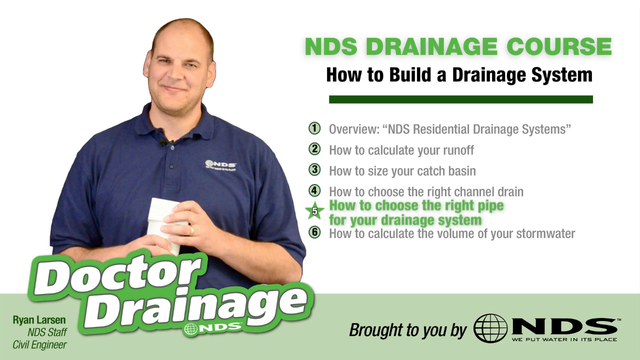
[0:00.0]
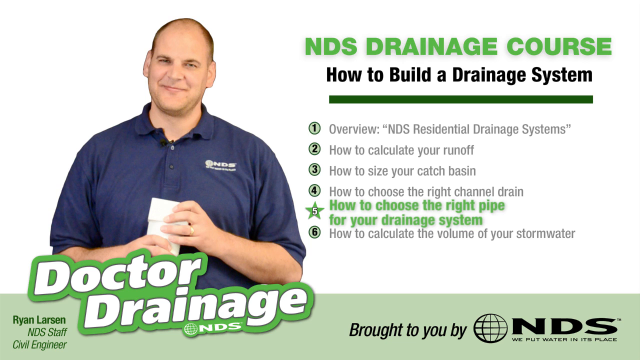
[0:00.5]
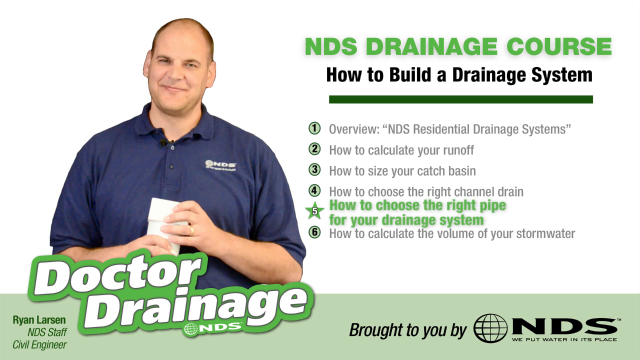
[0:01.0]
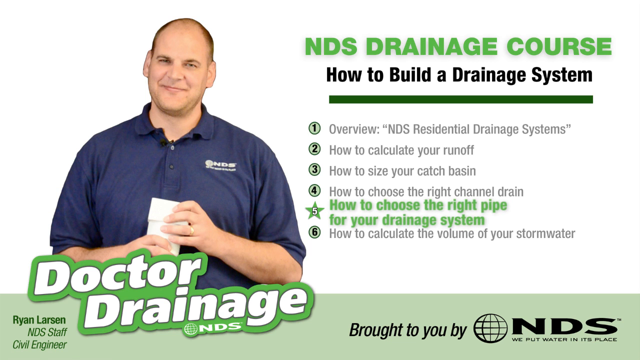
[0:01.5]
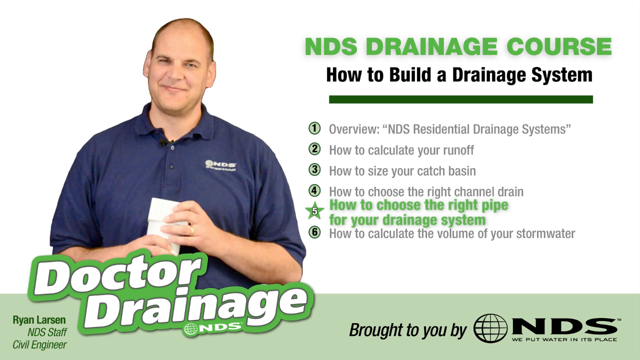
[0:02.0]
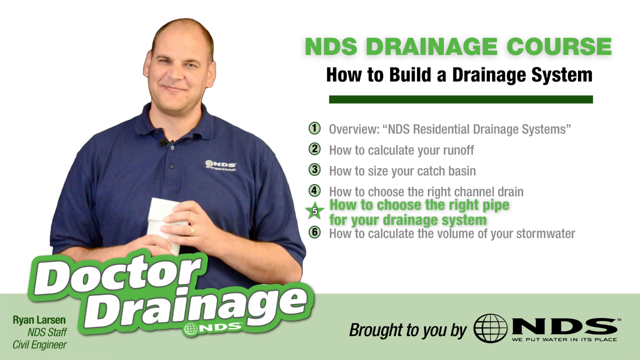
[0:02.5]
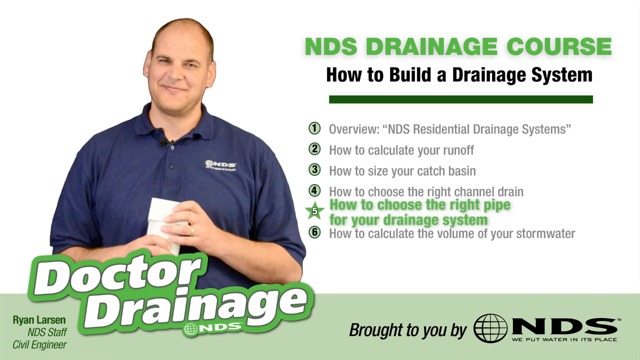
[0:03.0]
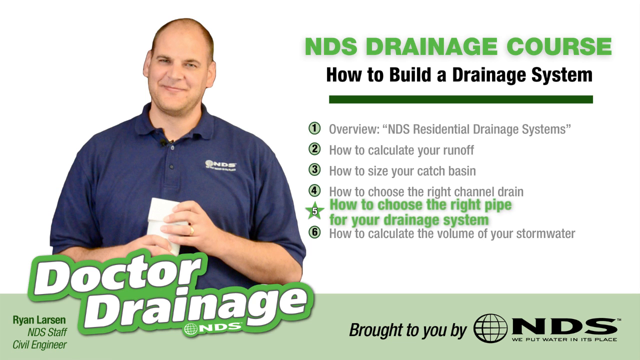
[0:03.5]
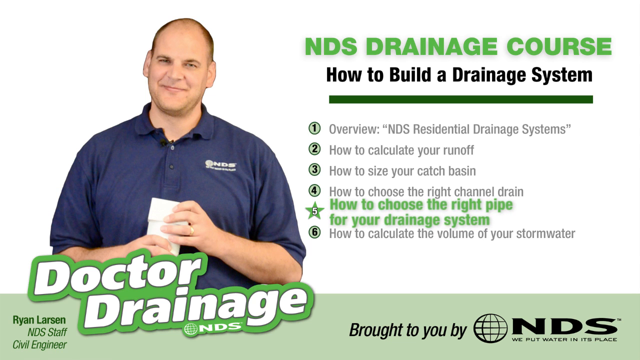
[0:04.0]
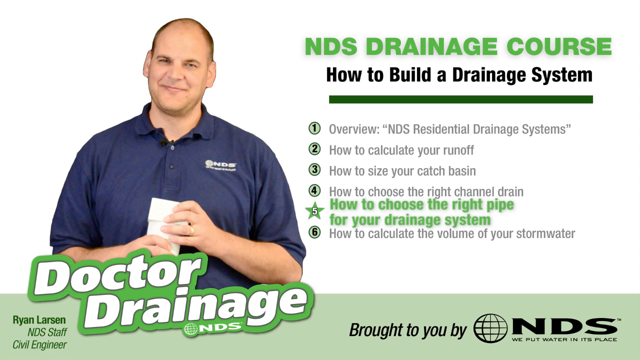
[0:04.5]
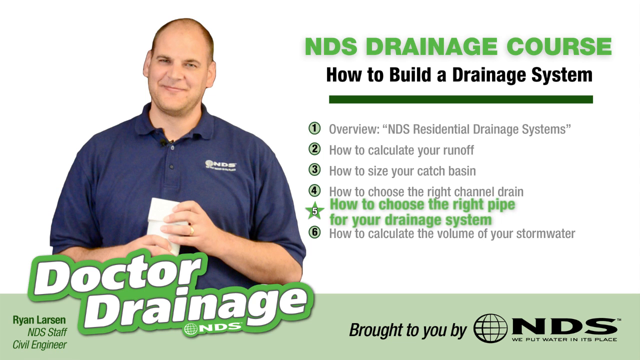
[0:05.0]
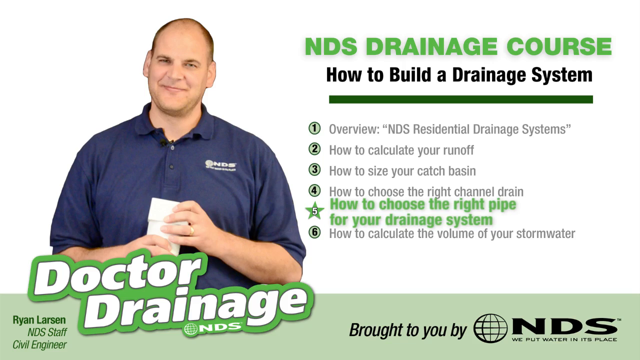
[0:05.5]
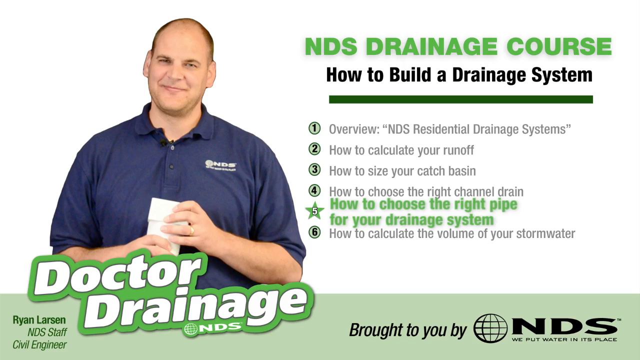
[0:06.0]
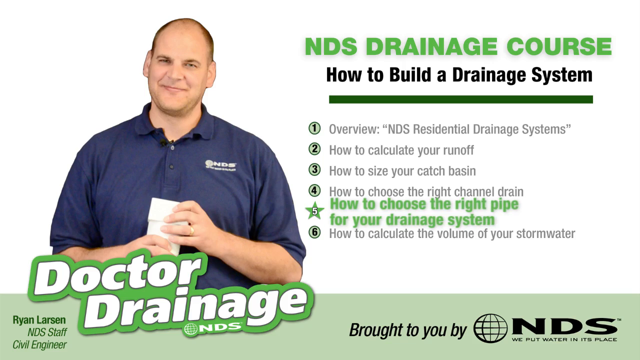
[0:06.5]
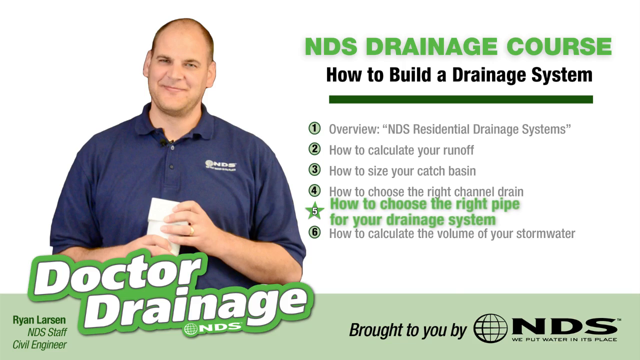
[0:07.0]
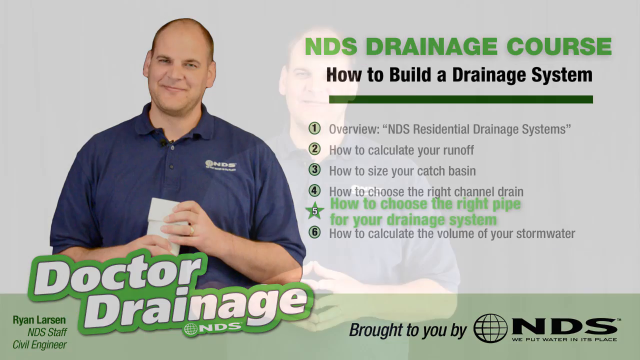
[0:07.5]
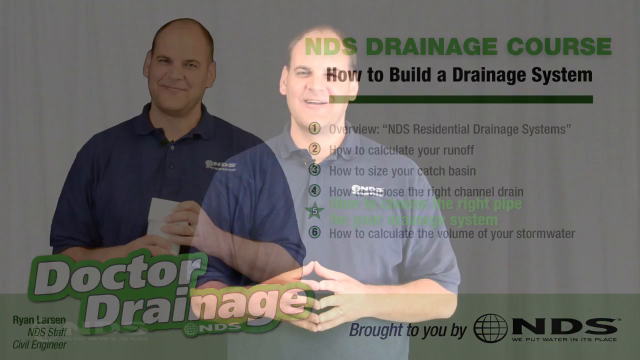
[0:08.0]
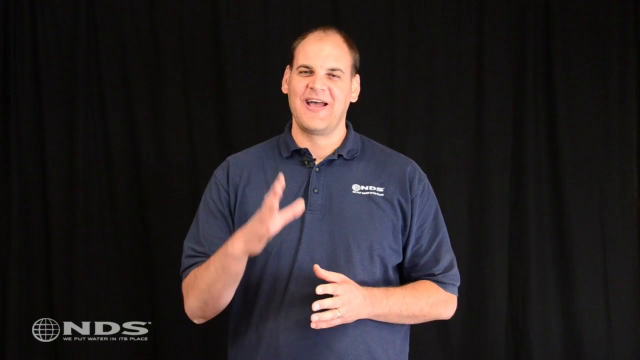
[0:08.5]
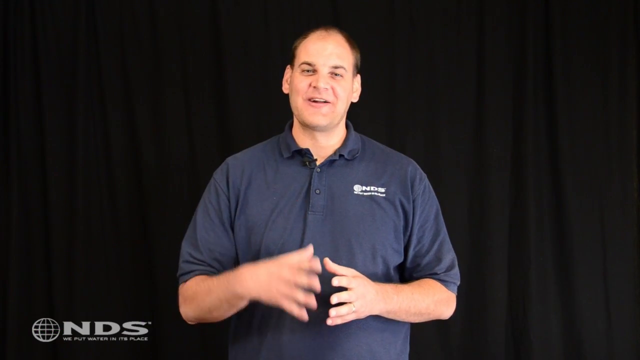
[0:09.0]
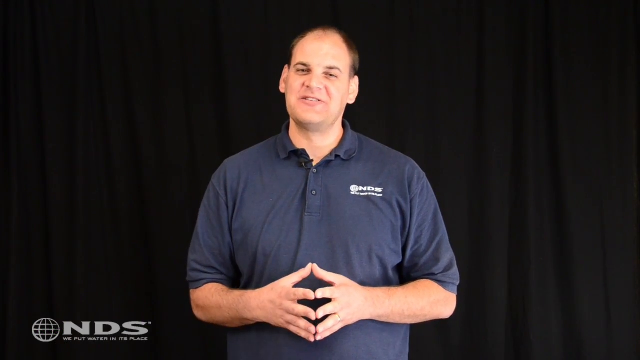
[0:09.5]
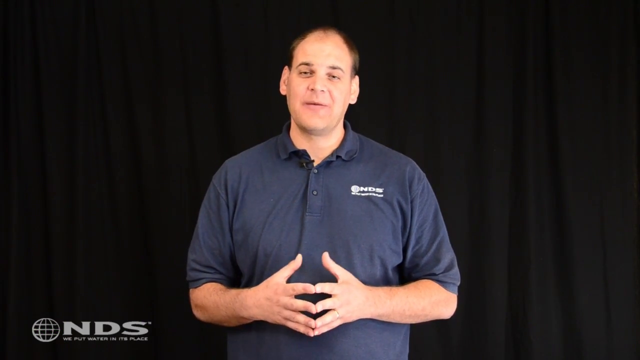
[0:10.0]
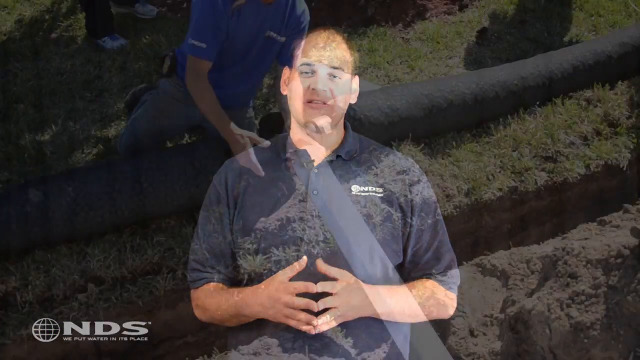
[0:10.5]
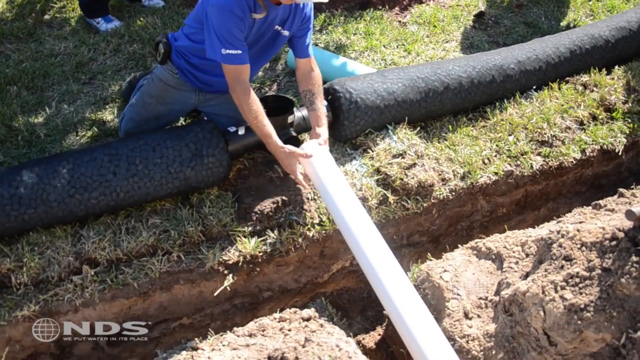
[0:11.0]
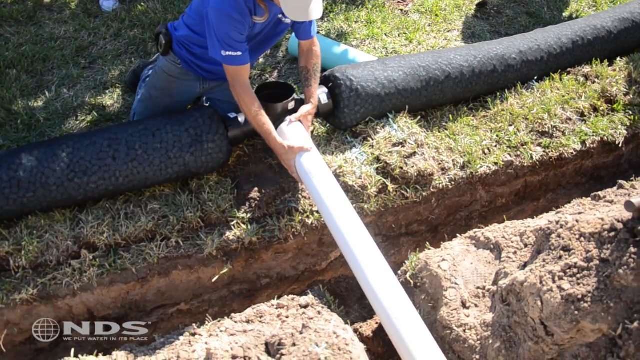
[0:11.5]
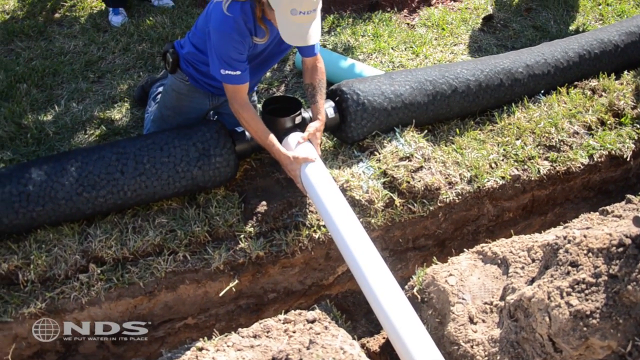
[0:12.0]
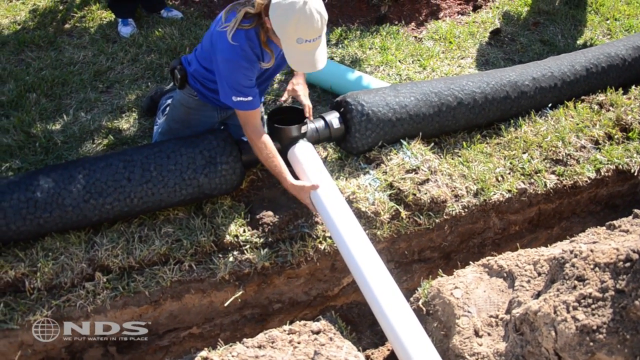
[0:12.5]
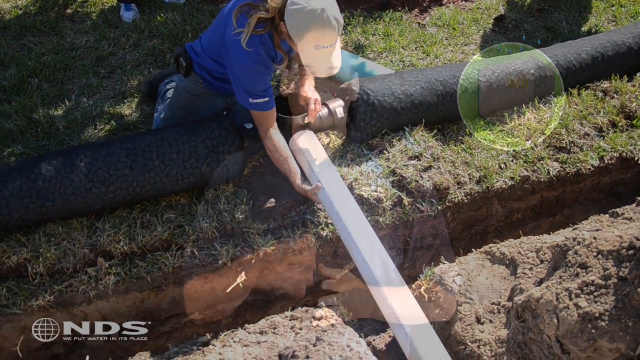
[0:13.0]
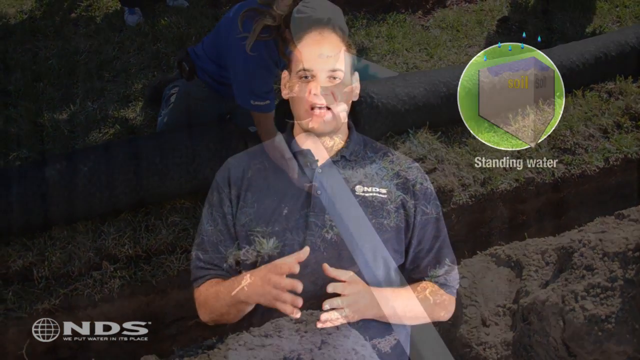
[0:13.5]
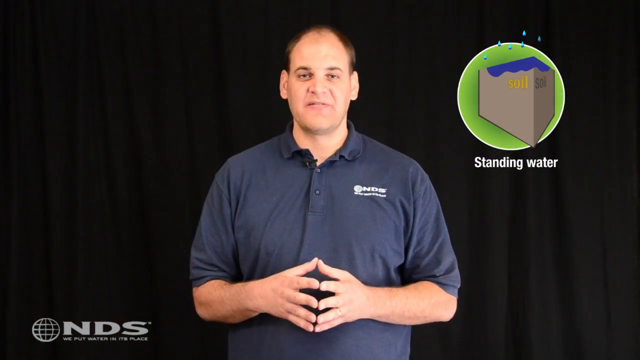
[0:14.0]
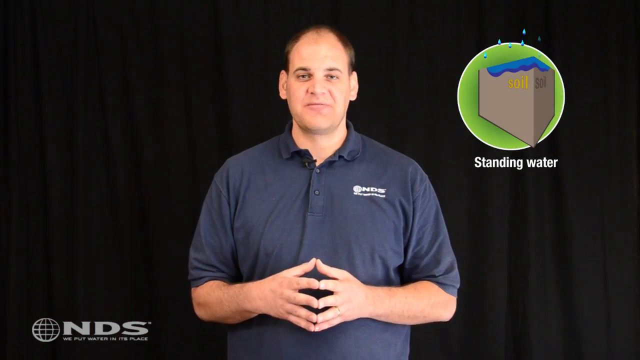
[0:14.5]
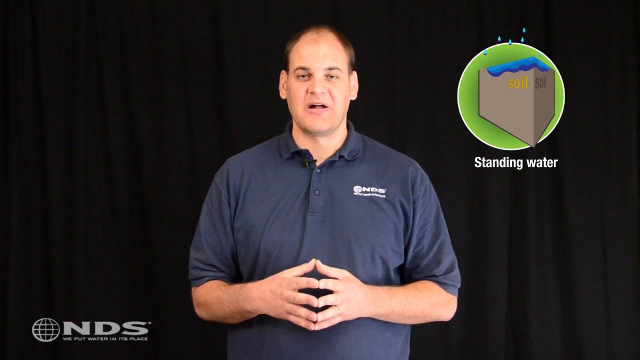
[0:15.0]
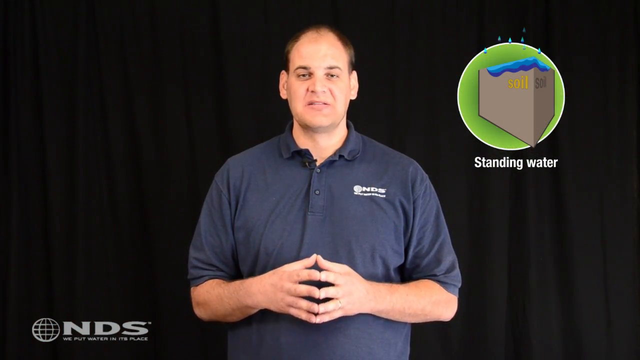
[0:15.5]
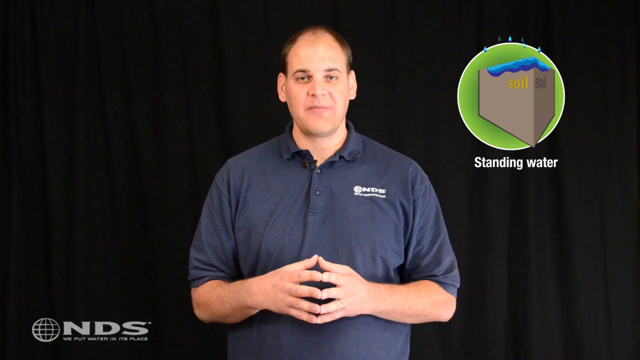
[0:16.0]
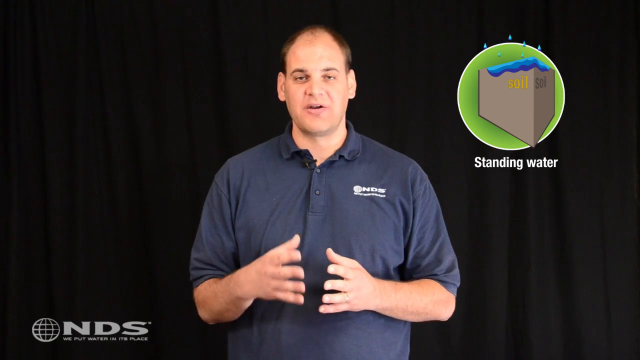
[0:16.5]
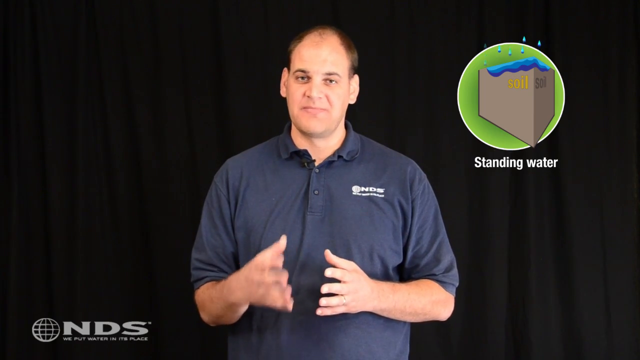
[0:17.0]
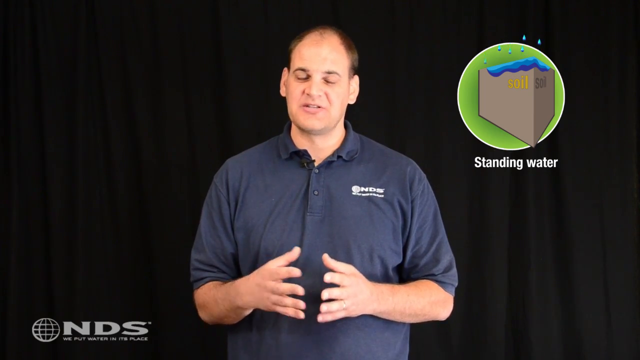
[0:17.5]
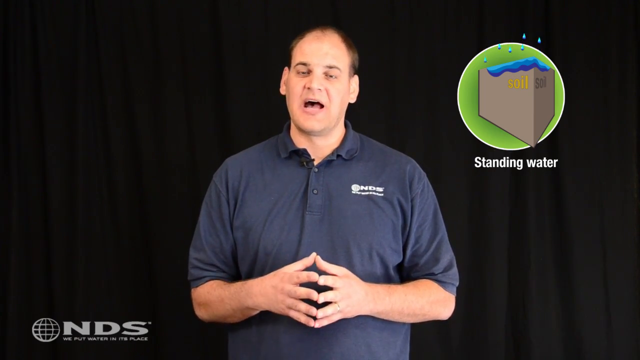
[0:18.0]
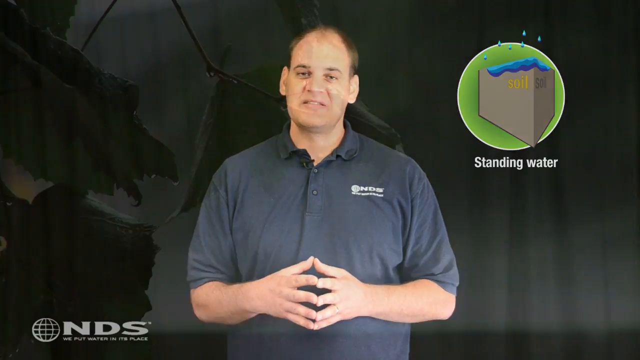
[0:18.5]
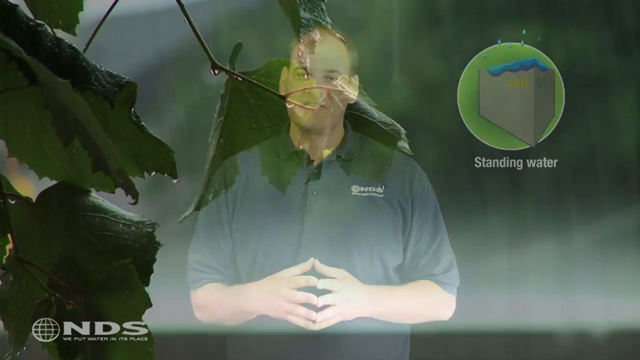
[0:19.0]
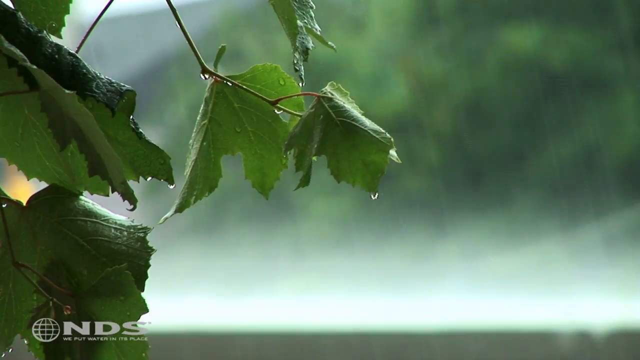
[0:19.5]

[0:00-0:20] The video opens with a still image of what appears to be a landing page. A man in his 30s, maybe early 40s, balding, wears a blue shirt with a business emblem on the upper left chest, its sleeves going down to his elbows, and holds what appears to be a piece of PVC in his hands. To the left of him on the white background are the words "NDS Drainage Course, How to Build a Drainage System", followed by six bullet points, with number five starred and highlighted: "How to Choose the Right Pipe for Your Drainage System". The other bullet points read "Overview NDS Residential Drainage System", "How to Calculate Your Runoff", "How to Size Your Catch Basin", "How to Choose the Right Channel Drain" and "How to Calculate the Volume of Your Storm Water". At the bottom right, text reads "Presented to You by NDS", with some smaller, unreadable words underneath. The video then cuts to what looks like a black curtain backdrop with the same man in the center of the screen, talking, his fingers spread wide with the fingertips all touching and the thumbs open. Next comes footage filmed from above of a worker in a white ball cap, a short-sleeved blue shirt and blue jeans, kneeling on the ground and pulling in a PVC pipe; the white PVC pipe tees into some sort of pipe on either side of him, and there appear to be trenches cut in the lawn. The video returns to the man talking, all his fingers and thumbs touching; he takes his right hand away from his left to gesture, then brings it back, fingertips touching and fingers spread apart. In the top right of the screen appears what seems to be a drawing of soil with grass on top and water sitting on top, suggesting he is talking about standing water. The video then cuts to an outdoor scene of rain falling on leaves, with the background out of focus.